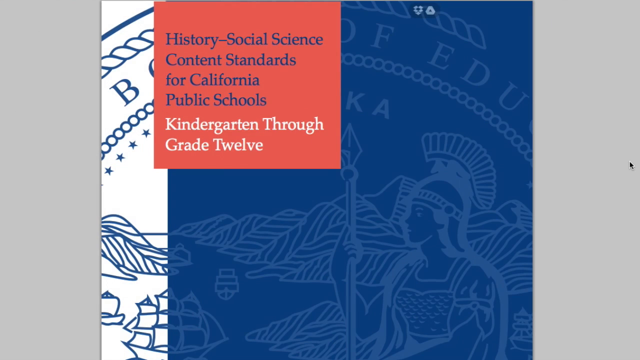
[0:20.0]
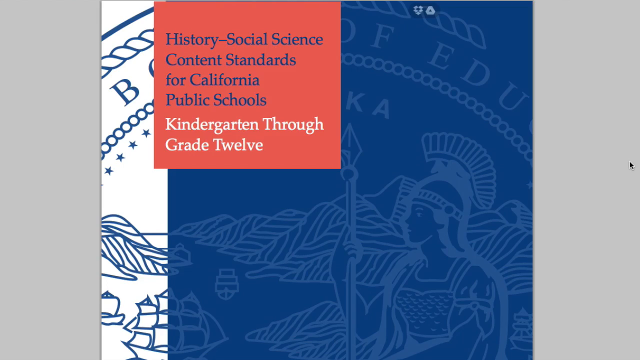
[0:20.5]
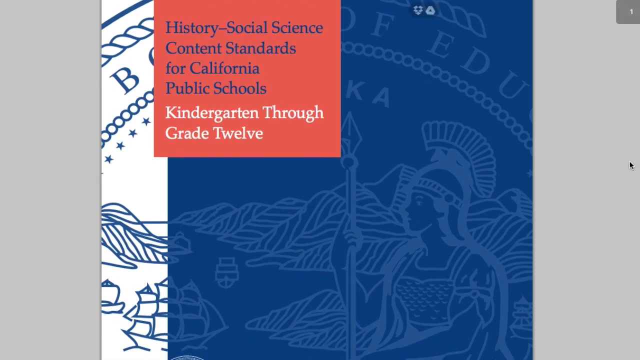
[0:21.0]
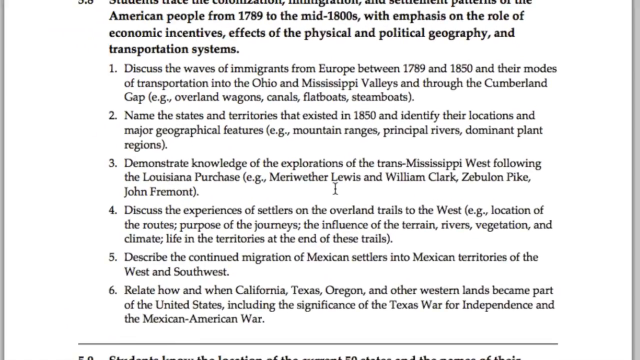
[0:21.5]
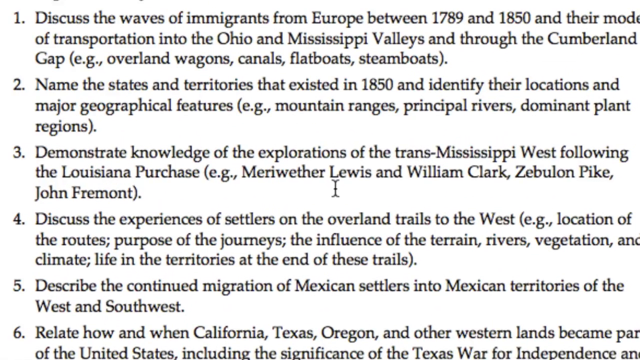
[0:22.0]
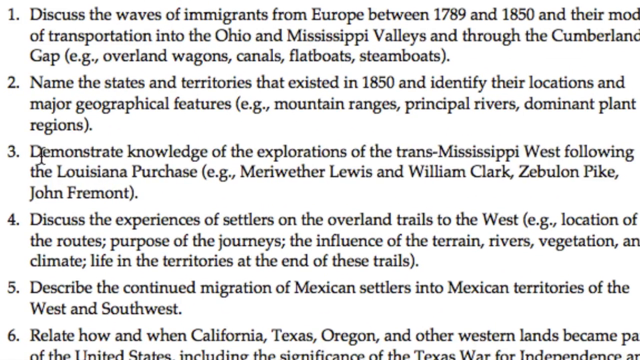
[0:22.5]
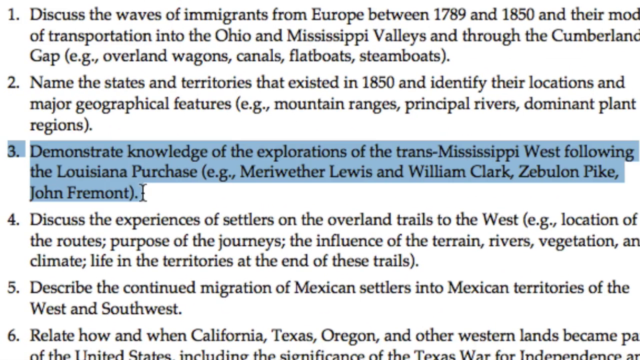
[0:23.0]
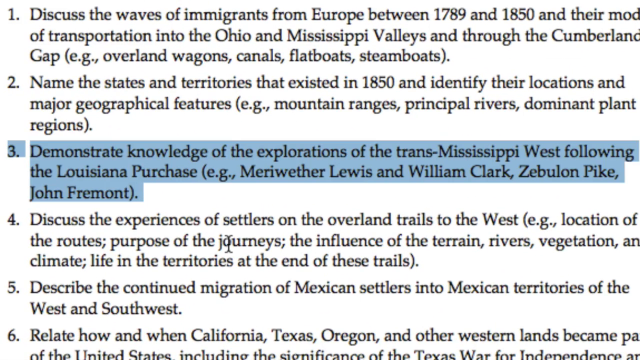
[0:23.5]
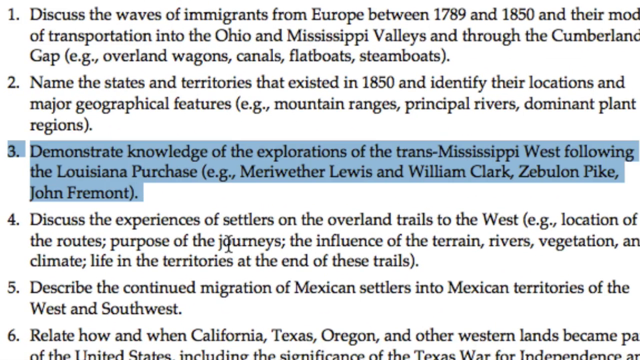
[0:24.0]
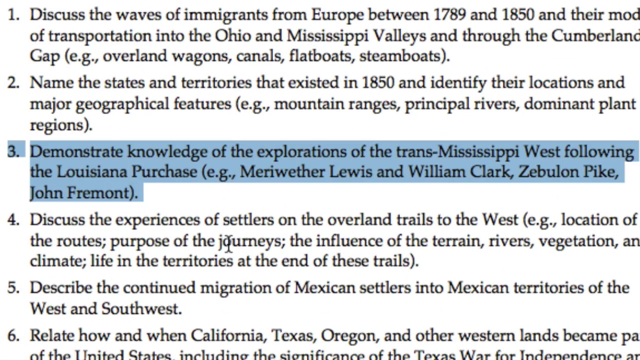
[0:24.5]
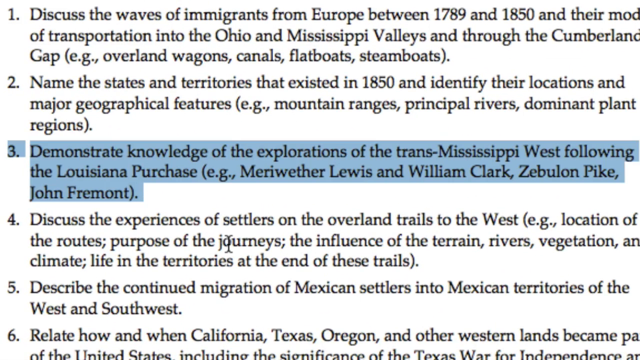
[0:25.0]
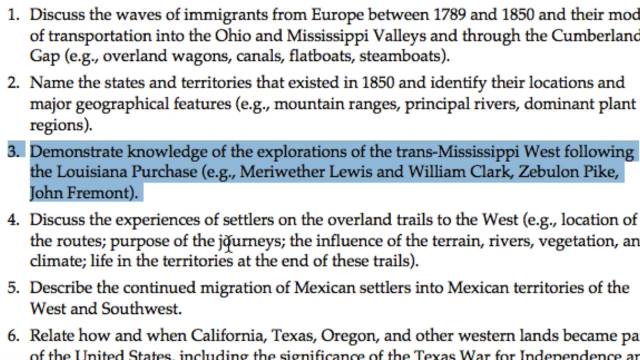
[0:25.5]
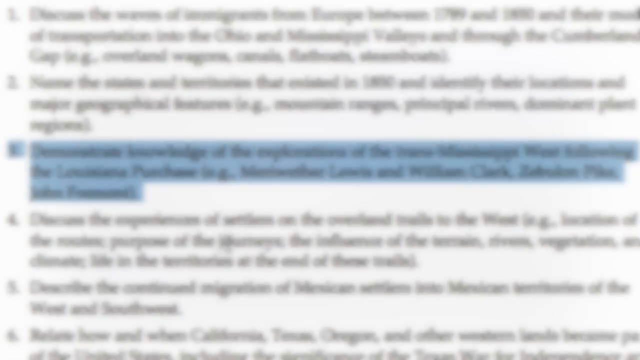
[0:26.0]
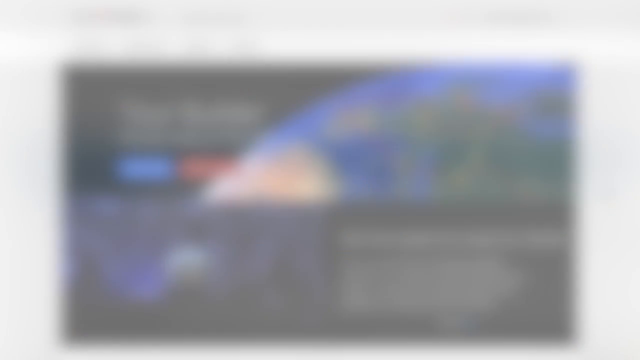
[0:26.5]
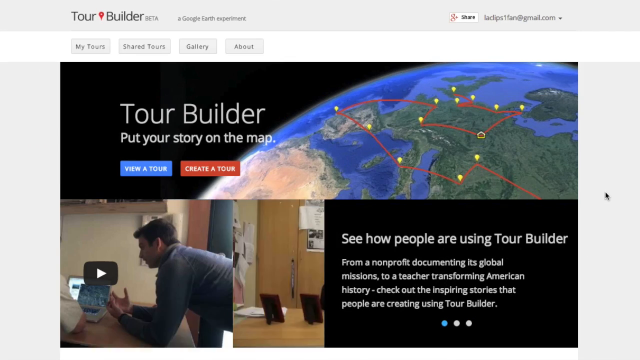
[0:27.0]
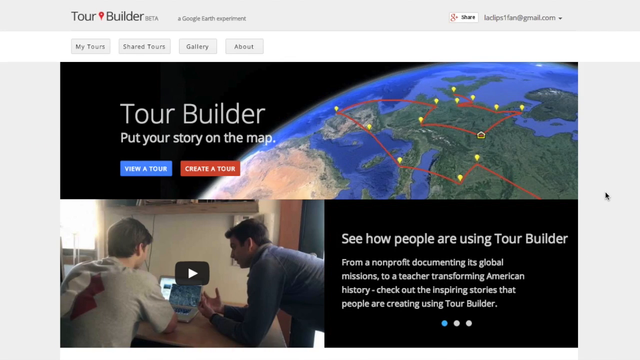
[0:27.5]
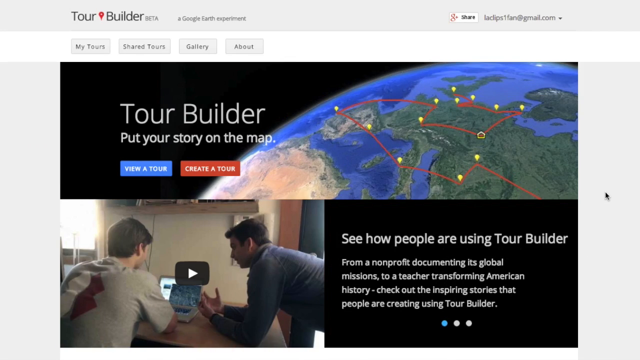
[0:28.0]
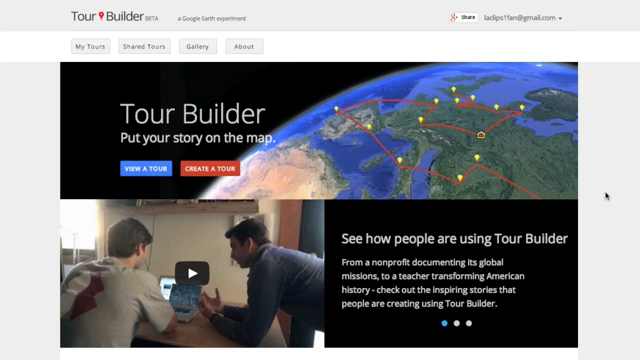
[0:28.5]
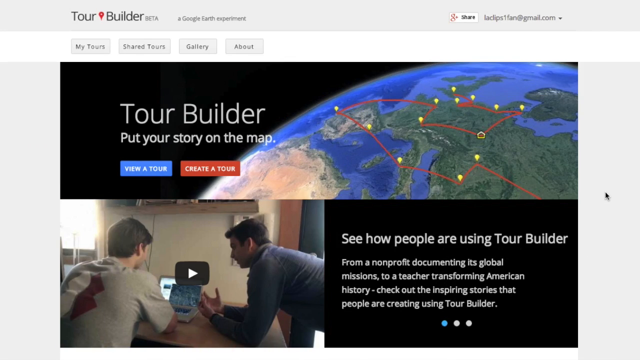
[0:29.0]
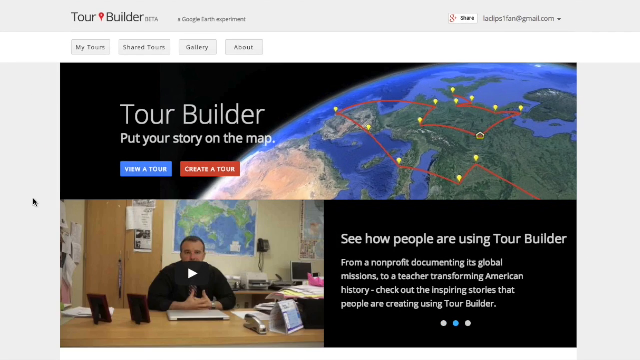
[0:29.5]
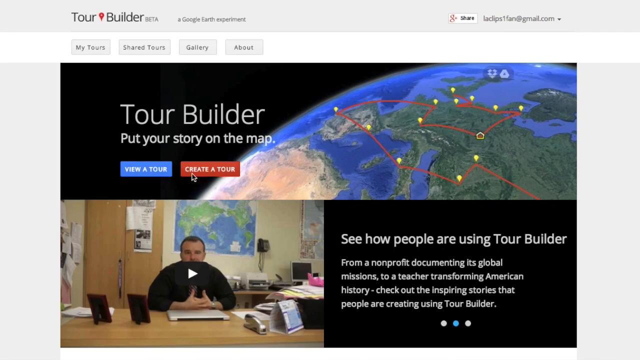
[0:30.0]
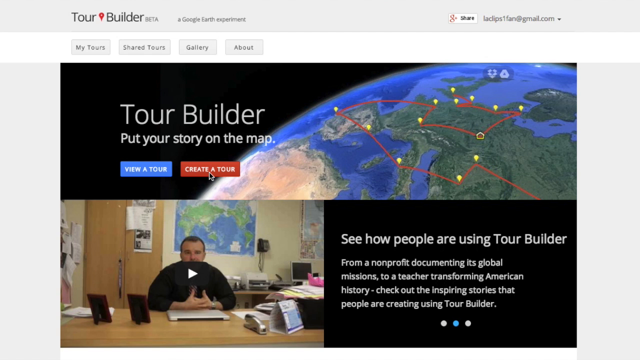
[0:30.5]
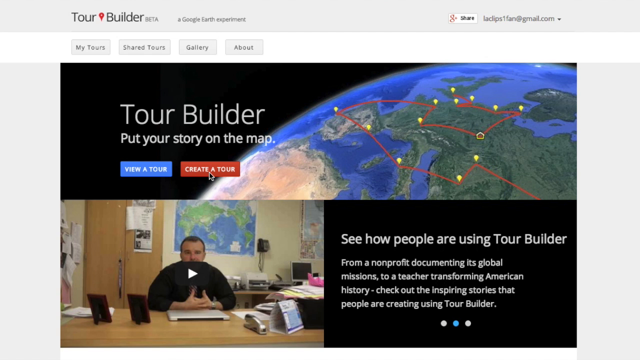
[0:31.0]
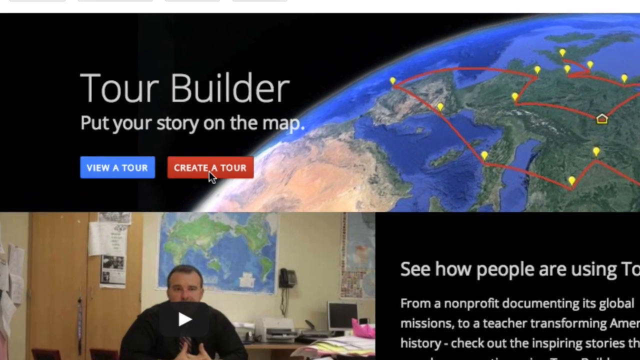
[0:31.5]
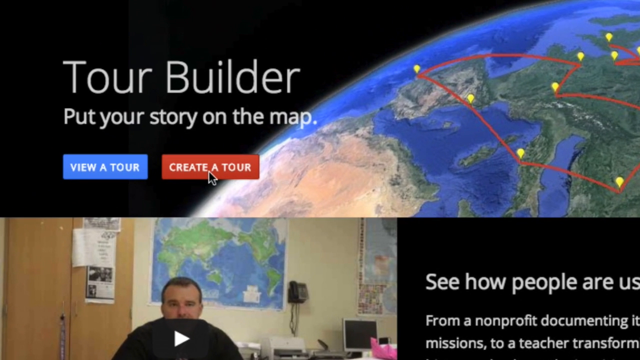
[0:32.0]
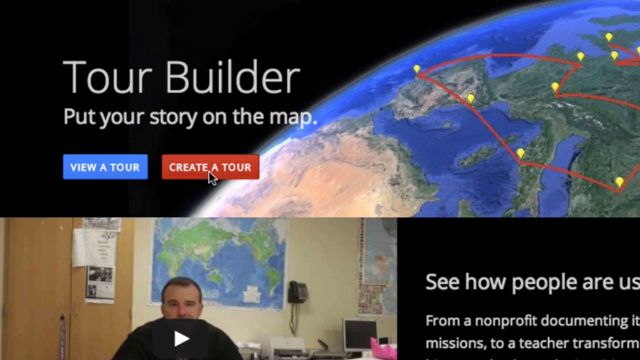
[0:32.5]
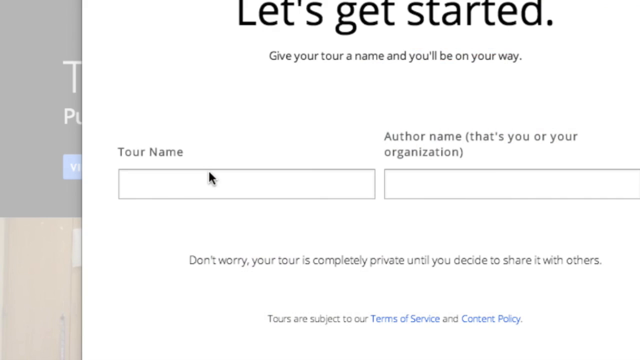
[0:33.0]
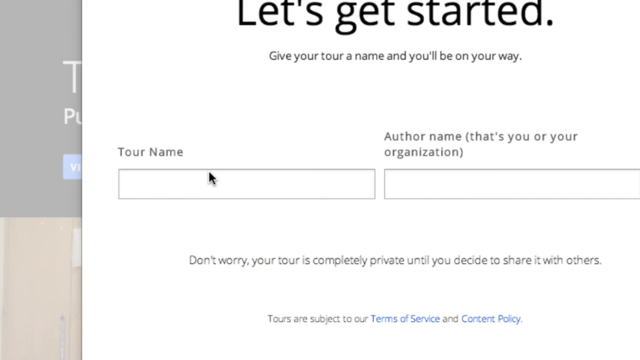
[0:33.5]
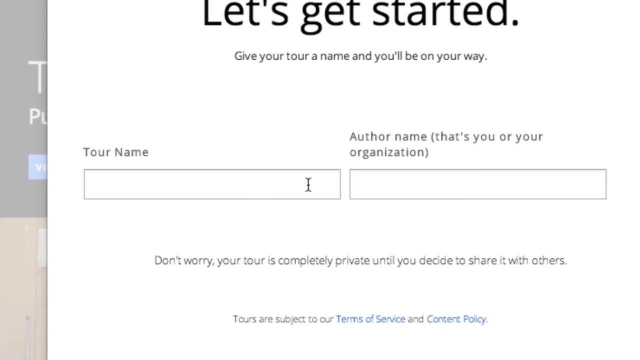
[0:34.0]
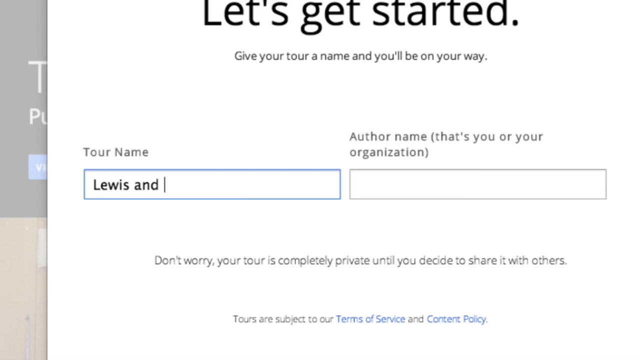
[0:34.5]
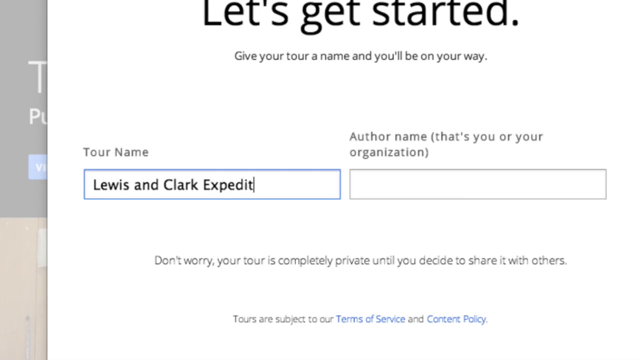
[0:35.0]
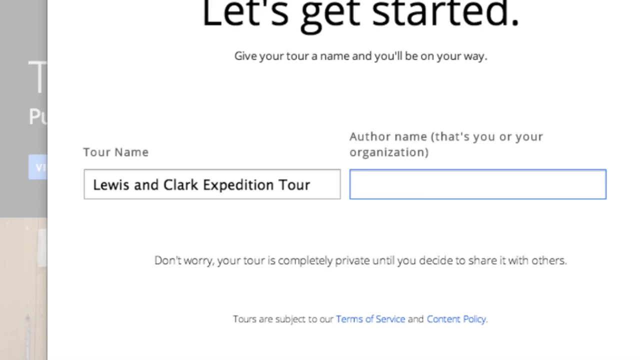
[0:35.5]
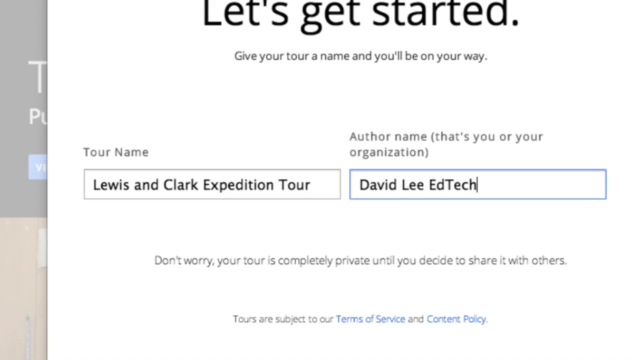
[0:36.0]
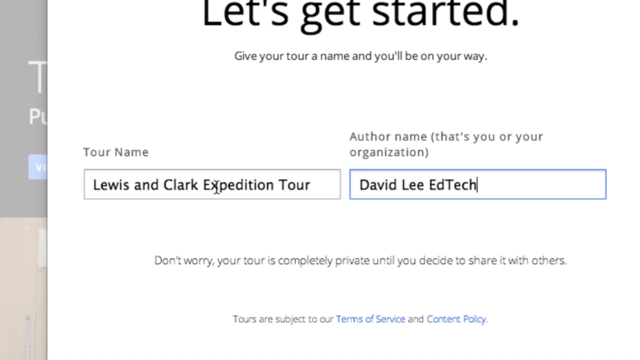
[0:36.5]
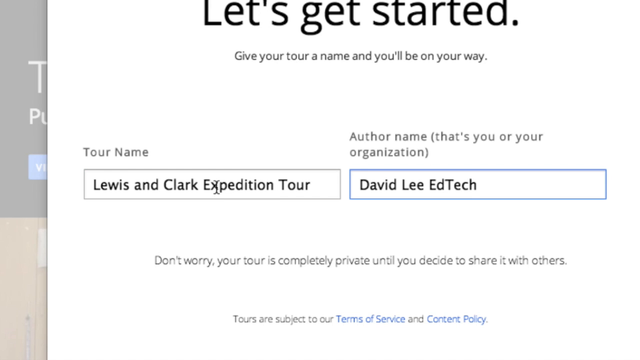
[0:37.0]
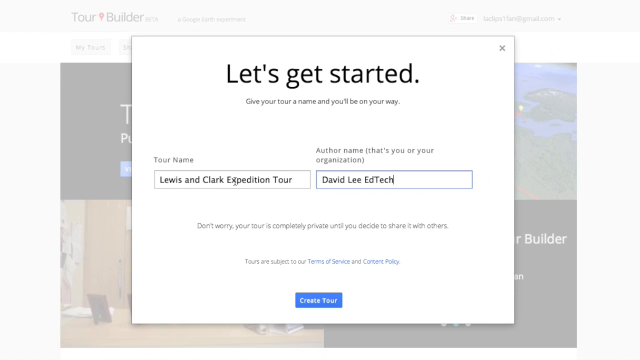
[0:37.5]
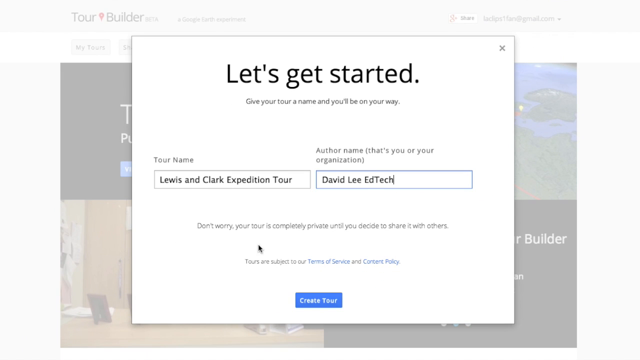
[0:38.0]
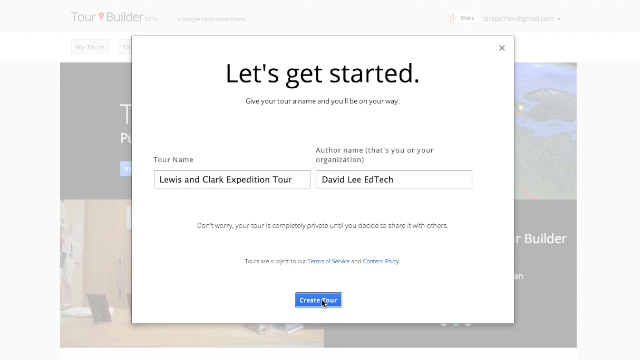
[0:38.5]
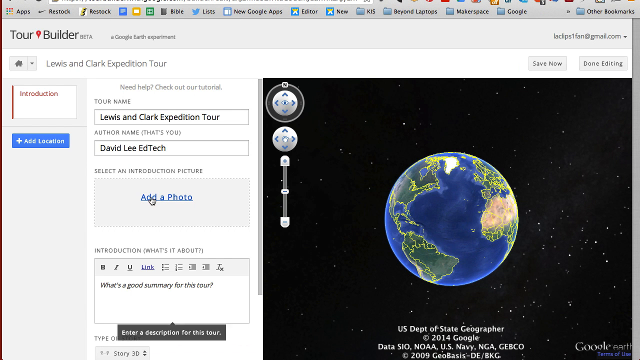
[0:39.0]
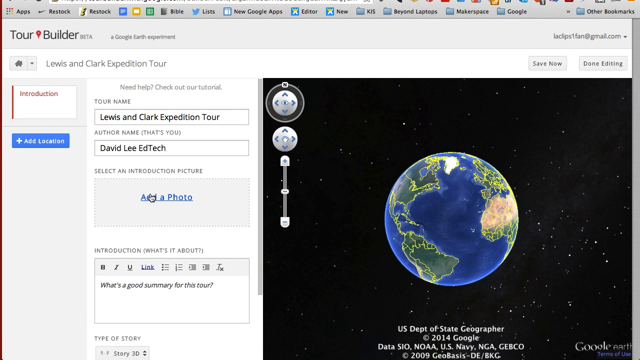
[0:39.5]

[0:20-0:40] A cover page has a red square at the top of the screen and reads "history, social science, content standards for California public schools, kindergarten through grade 12." Most of the text is dark blue, but "kindergarten through grade 12" is in white. The background shows something like a seal; most of it is dark blue, but the left portion, maybe one sixth of the width, is white. There is sort of an arc made of little circles, wreaths and stars, and it probably says Board of Education: the letter "B" is visible, most of the rest is cut off, then "of" and "edu" appear. The rest of the picture shows a Roman soldier with a spear and a valley behind him with a river and boats on it. The view then switches to a numbered list on a generic white background with a lot of text. Item number three is highlighted and reads "demonstrate knowledge of the explorations of the Trans-Mississippi West following the Louisiana Purchase, e.g. Meriwether Lewis and William Clark," followed by further names including John Fremont.